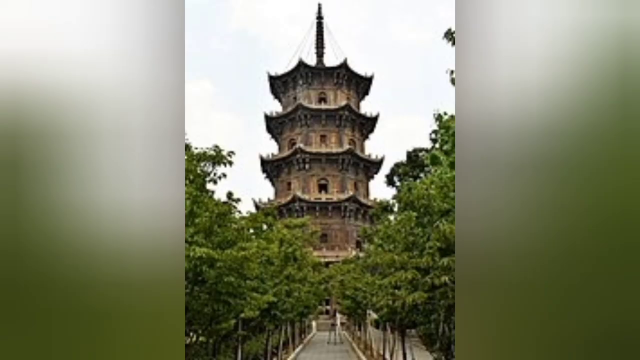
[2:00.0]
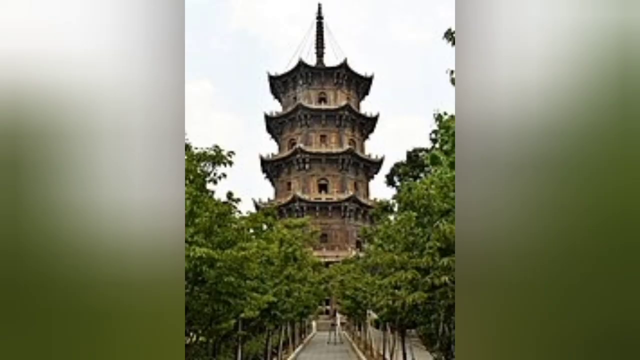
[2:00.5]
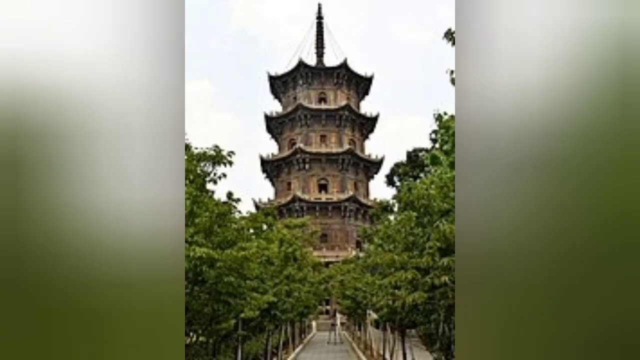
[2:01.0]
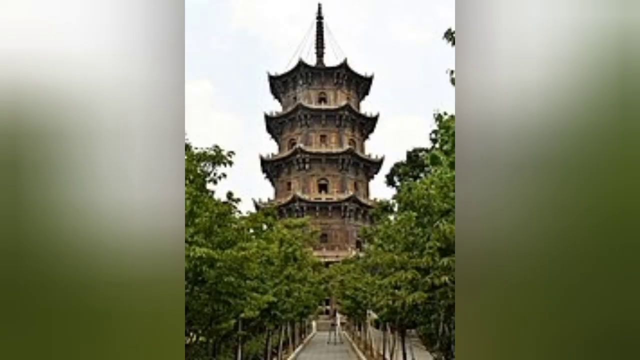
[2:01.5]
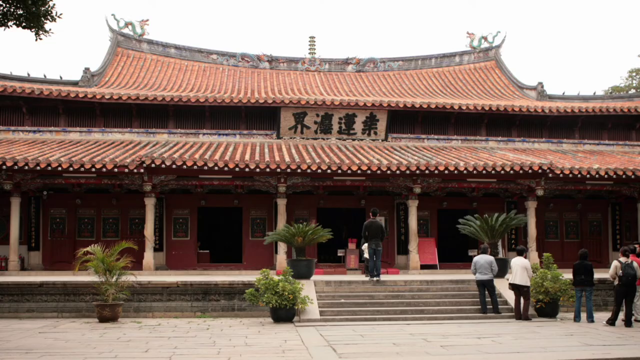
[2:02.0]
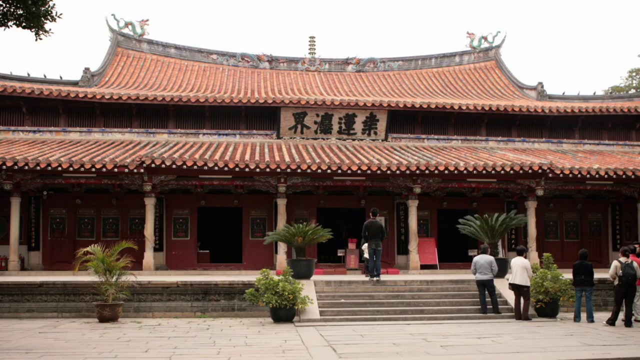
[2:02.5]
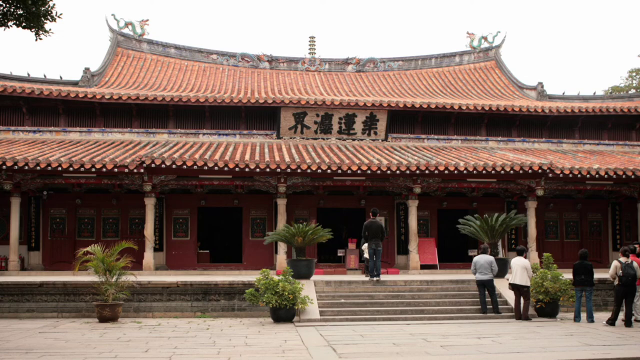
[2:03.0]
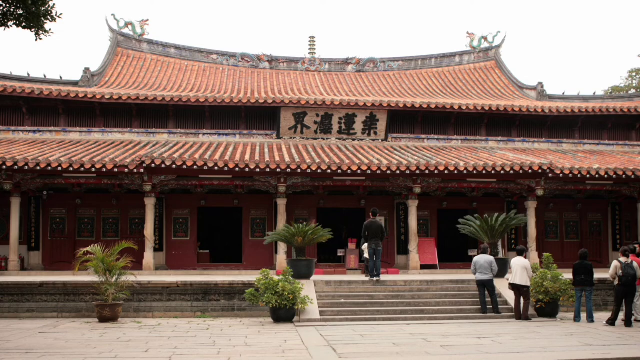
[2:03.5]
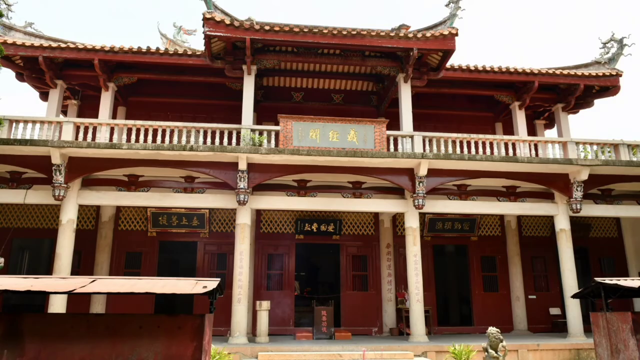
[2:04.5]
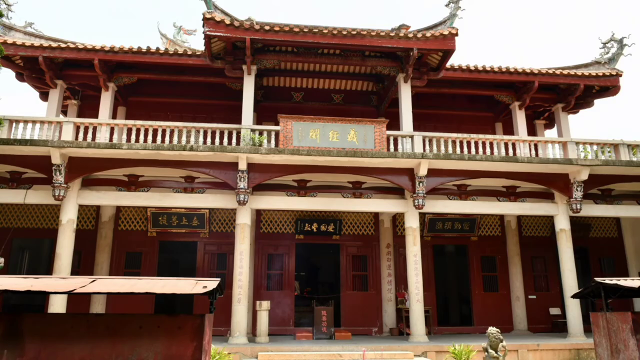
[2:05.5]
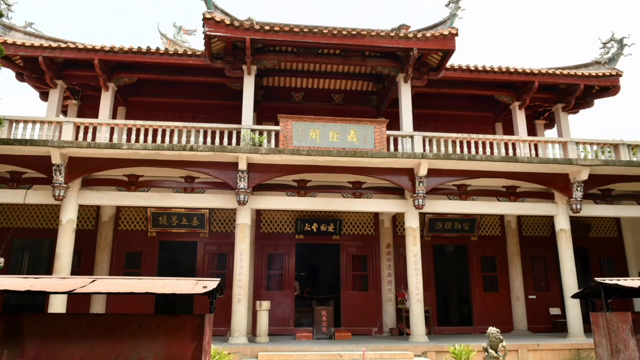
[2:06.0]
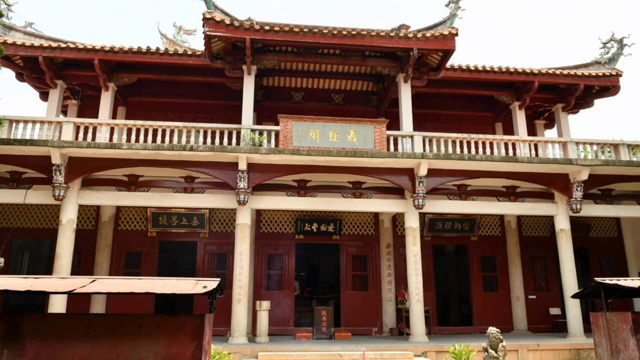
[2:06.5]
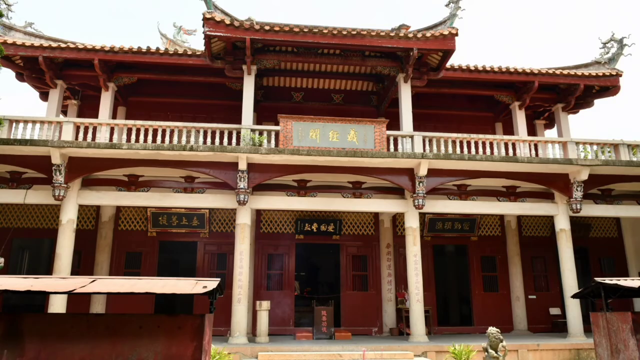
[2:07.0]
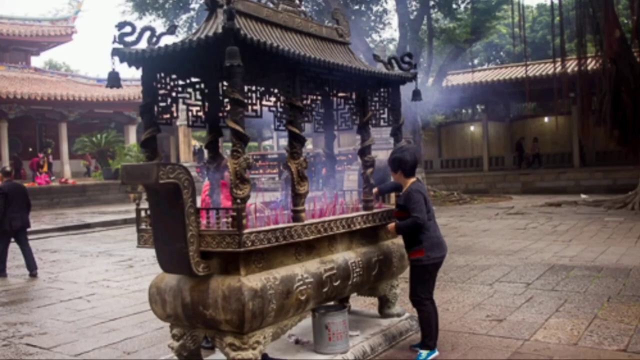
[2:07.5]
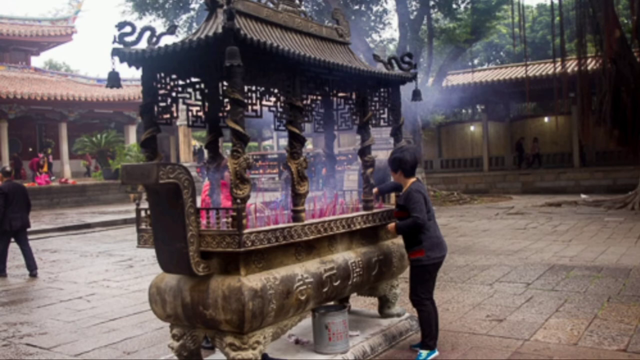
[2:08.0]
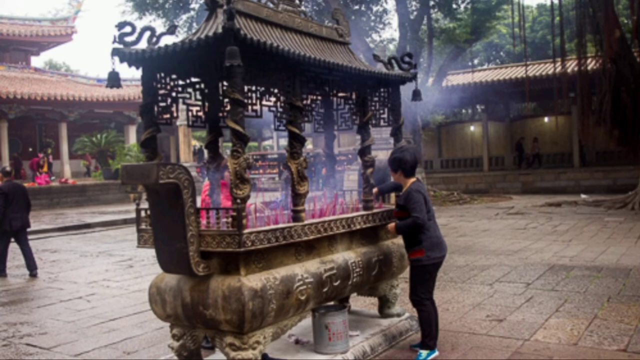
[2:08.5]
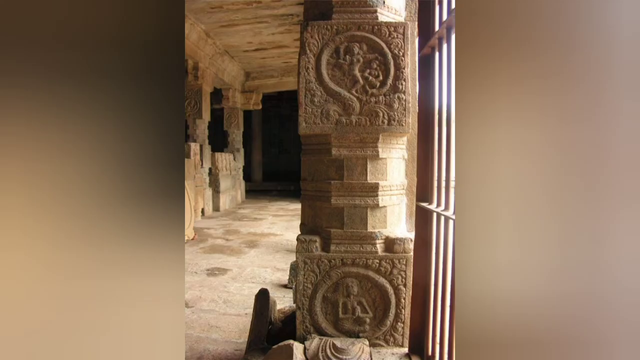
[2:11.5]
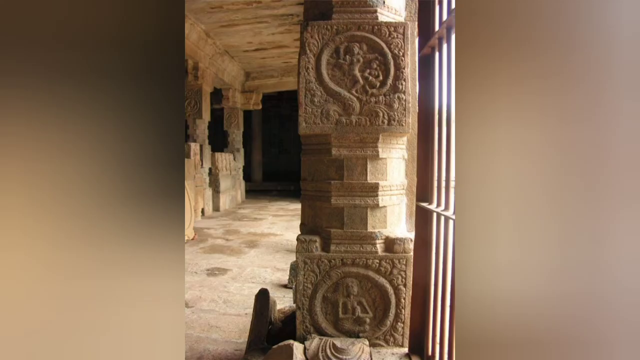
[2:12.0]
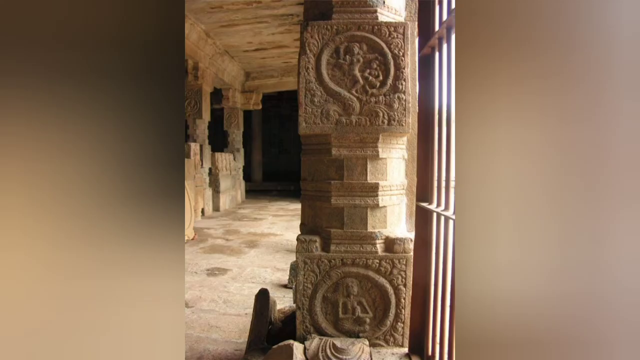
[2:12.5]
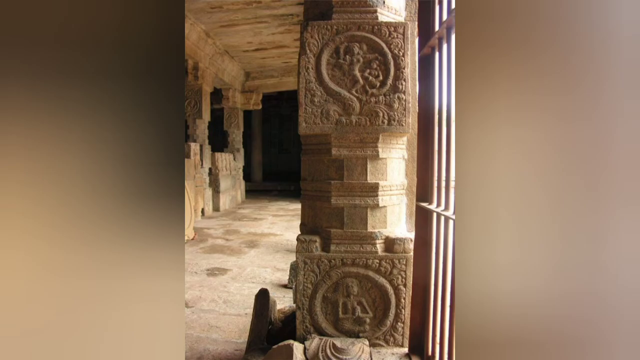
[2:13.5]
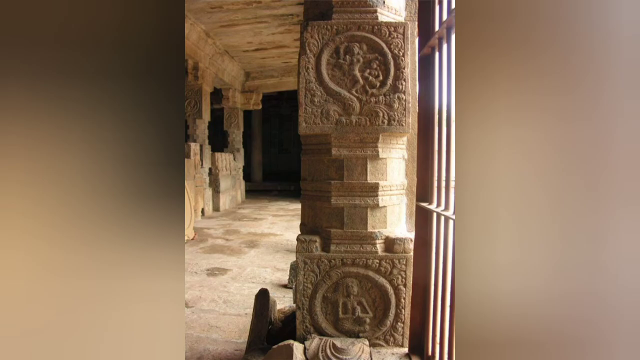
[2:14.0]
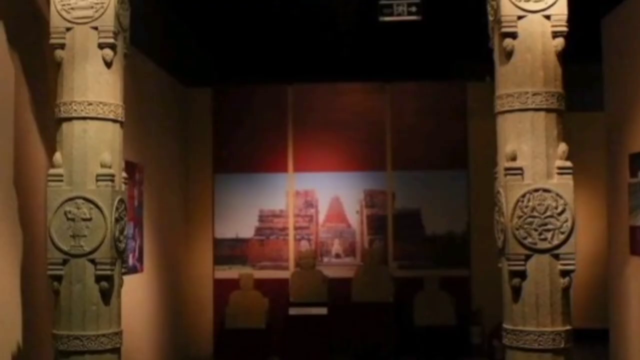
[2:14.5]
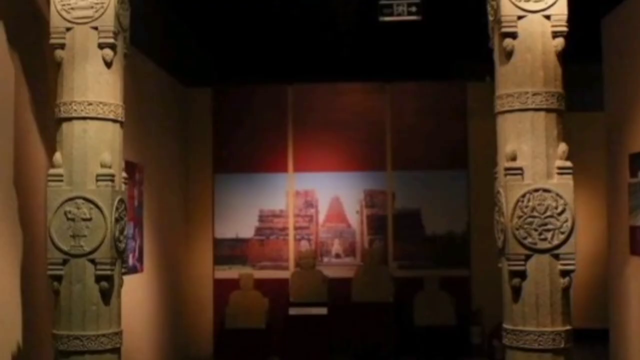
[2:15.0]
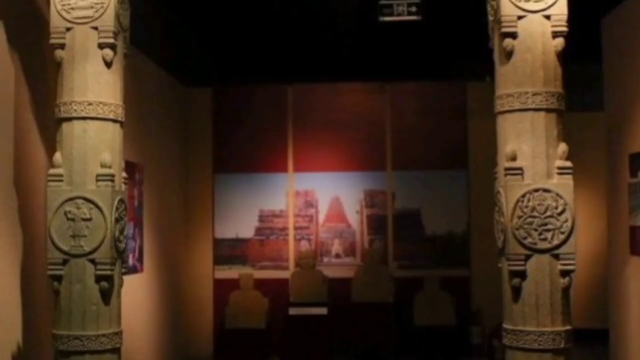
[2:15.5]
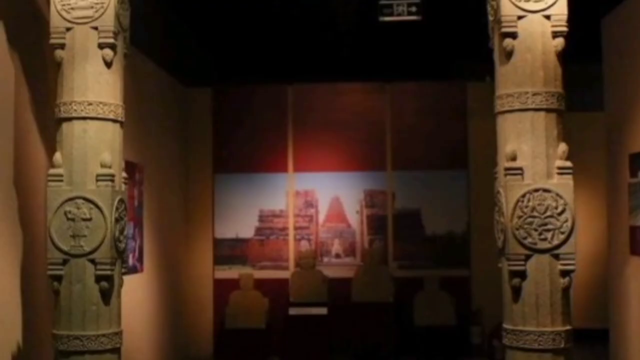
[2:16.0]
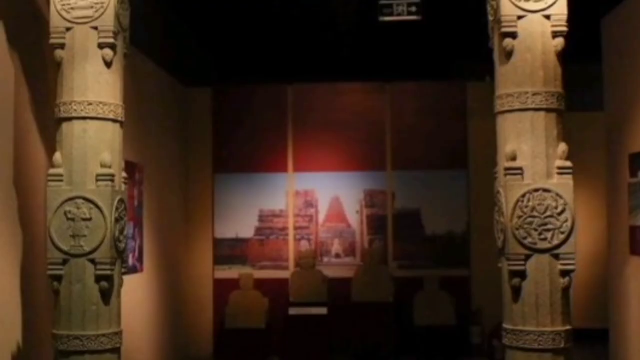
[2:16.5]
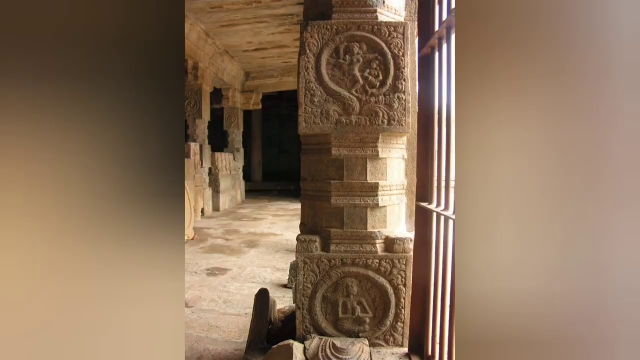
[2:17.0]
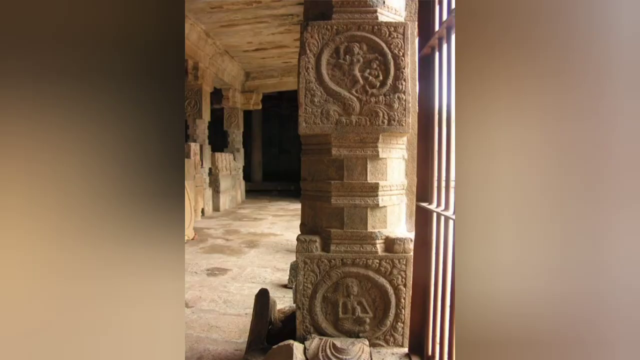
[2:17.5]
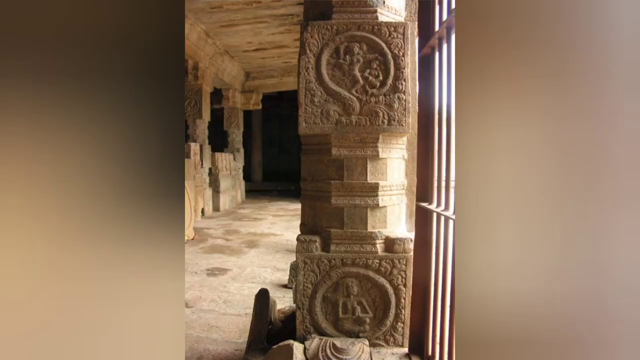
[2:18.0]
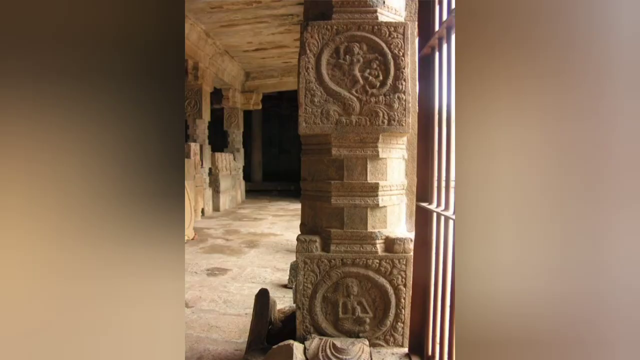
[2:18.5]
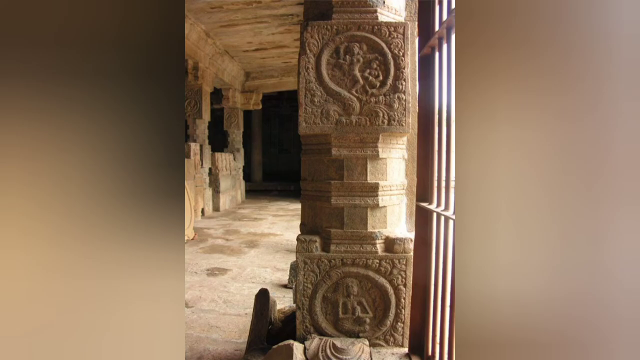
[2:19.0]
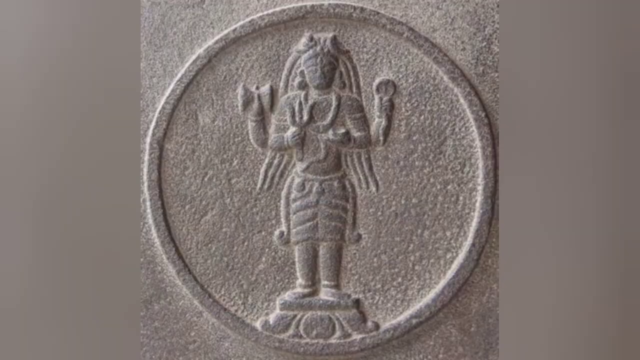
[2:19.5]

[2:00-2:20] A Chinese-looking tower, apparently made of wood, with traditional curved roofs is shown, followed by two Chinese temples. A shrine appears with a woman in front of it making an offering; smoke seems to rise from it, possibly from burning incense sticks. The shrine has a carved stone base with legs and is set in a stone-paved courtyard with what look like single-story cloisters running around it. It has pink fabric attachments, a traditional Chinese-style roof and quite a lot of decoration, mostly geometric designs rather than images of people or animals. Stone inscriptions are seen from a different angle and are very ornate.